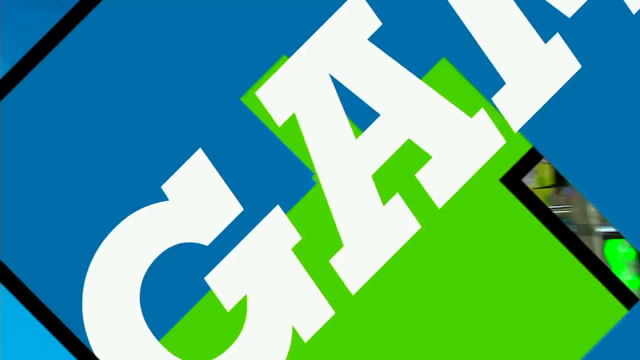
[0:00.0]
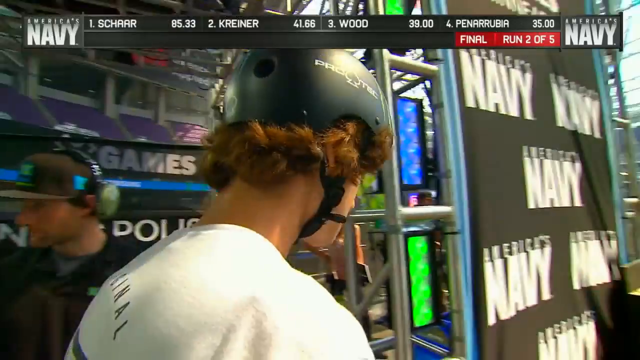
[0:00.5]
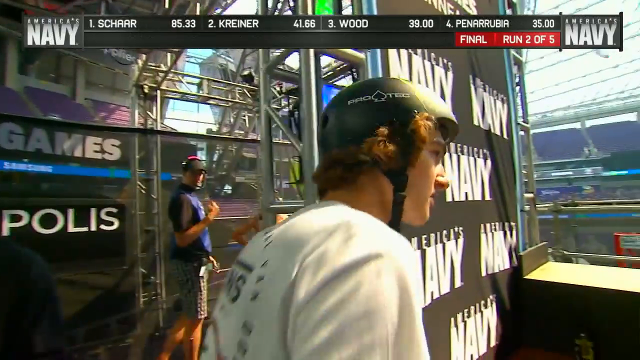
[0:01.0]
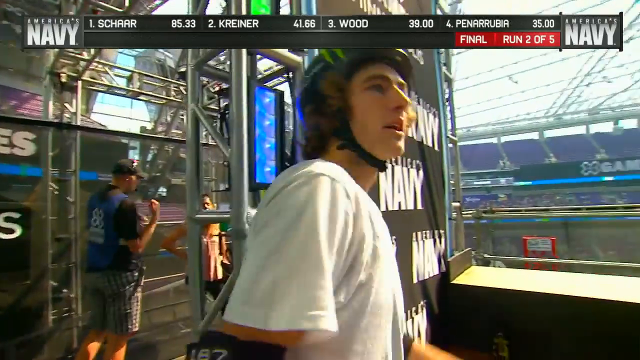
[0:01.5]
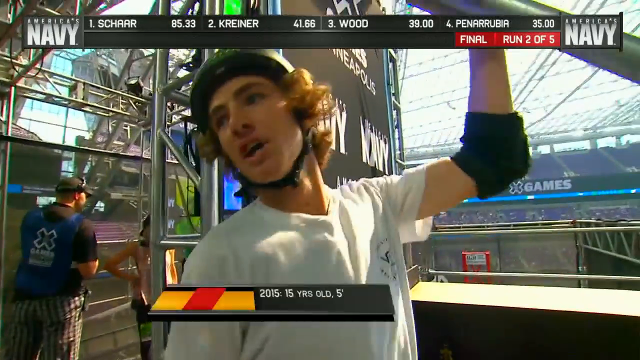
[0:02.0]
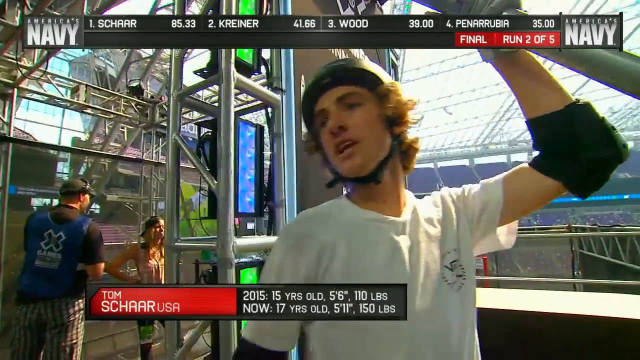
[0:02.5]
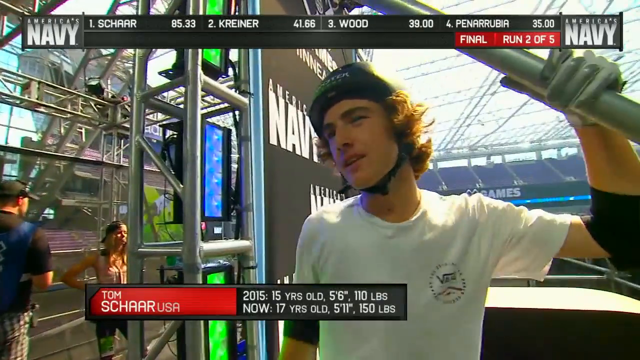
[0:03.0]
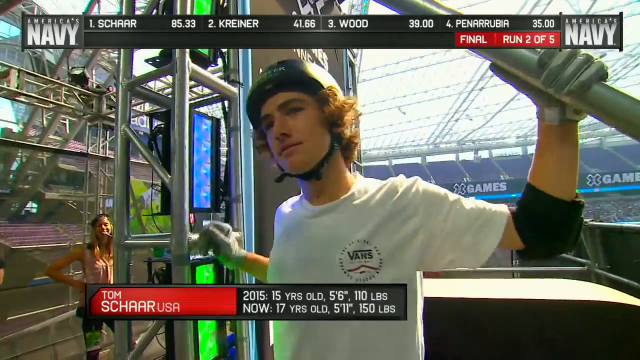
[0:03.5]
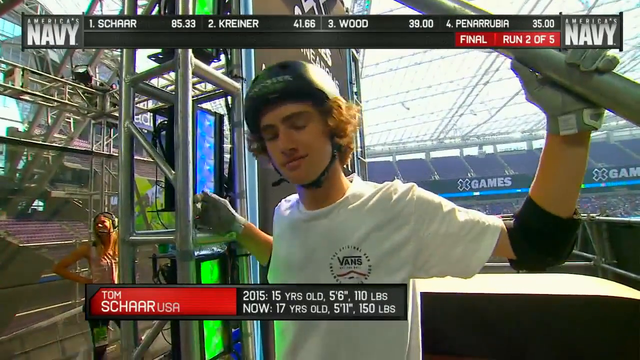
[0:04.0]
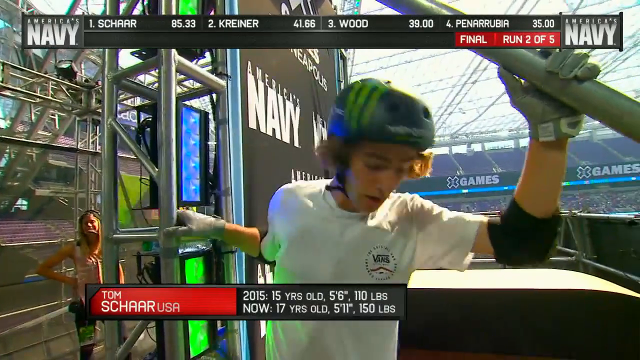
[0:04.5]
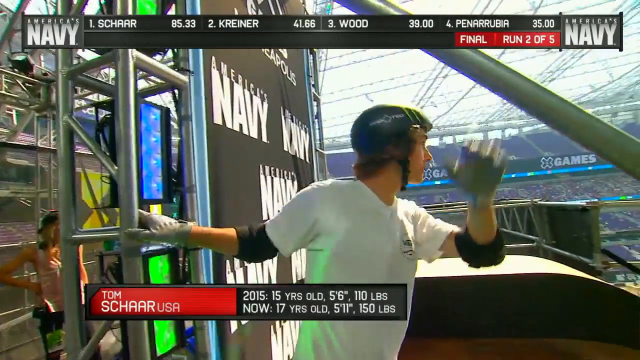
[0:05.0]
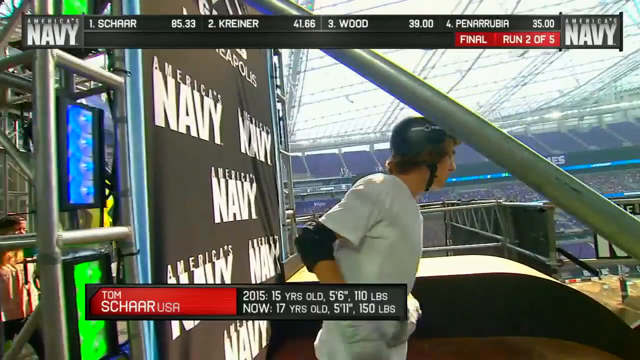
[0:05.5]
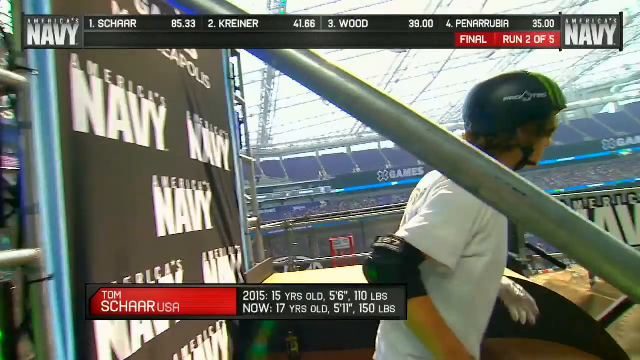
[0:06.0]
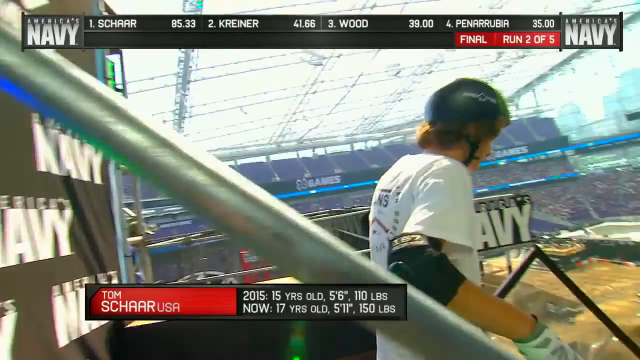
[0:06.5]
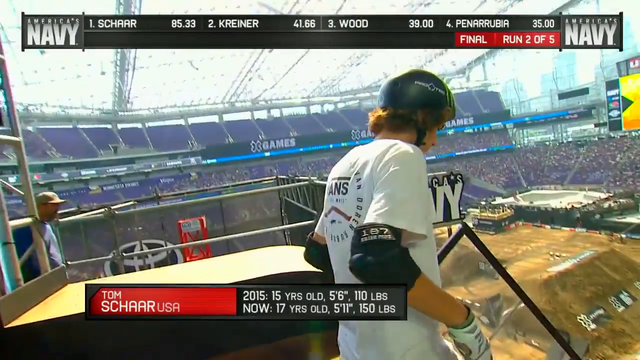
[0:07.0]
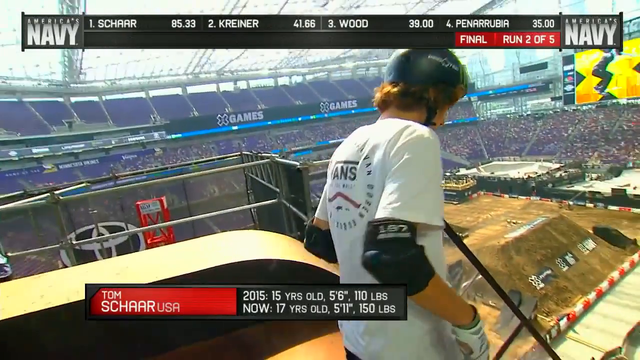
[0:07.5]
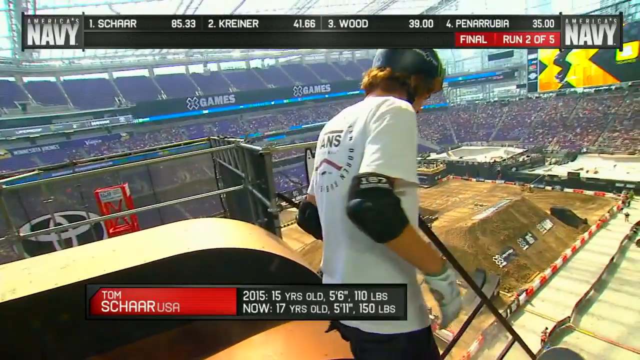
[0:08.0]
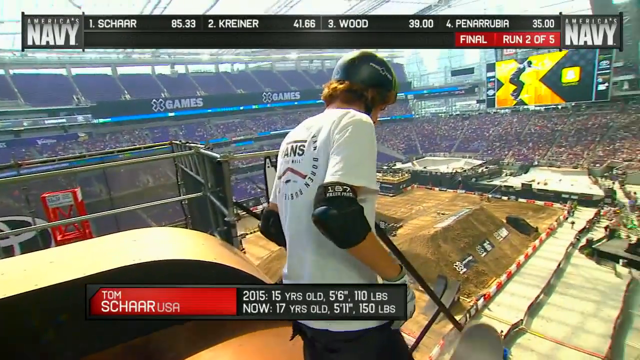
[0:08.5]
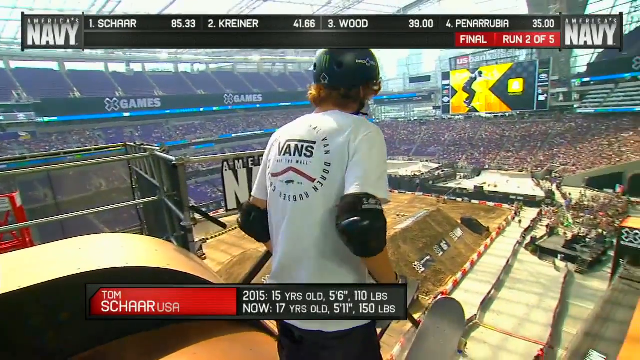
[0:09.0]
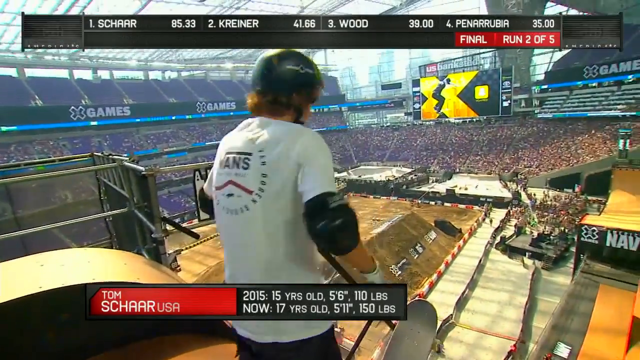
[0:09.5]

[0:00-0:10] A big skateboarding event, clearly a major competition. Two guys in black helmets are visible: one in the background wears a purple shirt, and the one in the foreground wears a white shirt and has somewhat reddish curly hair. They appear to be standing on top of a massive half pipe or other skateboarding structure. An advertisement for America's Navy is in the background. The man in the foreground turns around and talks to the reporter or camera person behind him. An information box pops up: a red rectangle with white text reading "Tom Schaar, USA," and more white text reading "2015, 15 years old, 5'6", 110 pounds. Now 17 years old, 5'11", 150 pounds." He wears a white t-shirt with what is probably a Vans logo, black elbow pads and white gloves, and he looks very young. The reporter gestures. As Tom lets go and turns around, he is standing at the top of a massive half pipe, apparently in an indoor stadium that looks mostly empty. He stands at the edge of the half pipe with the skateboard, getting ready to drop in; the half pipe looks to be possibly over two stories tall.